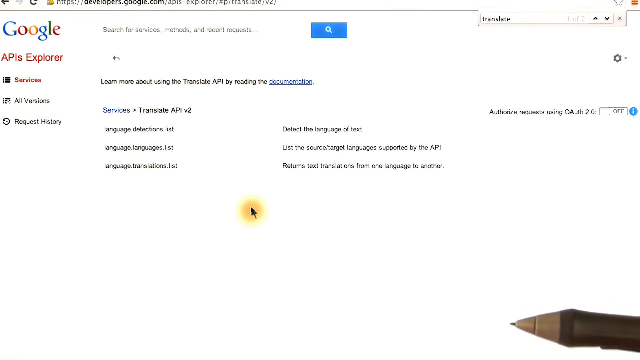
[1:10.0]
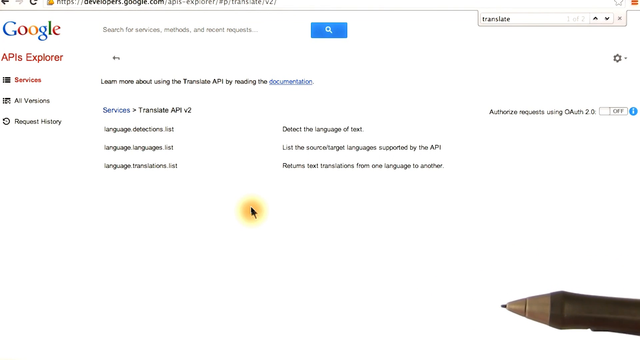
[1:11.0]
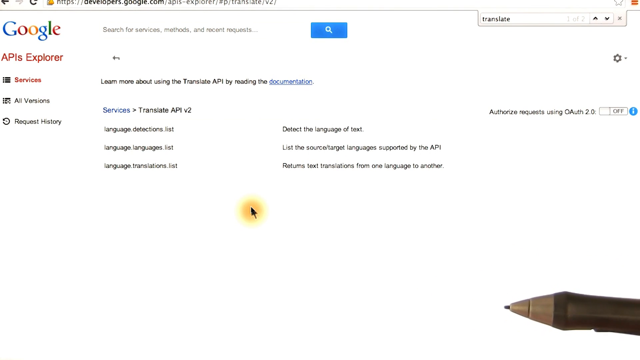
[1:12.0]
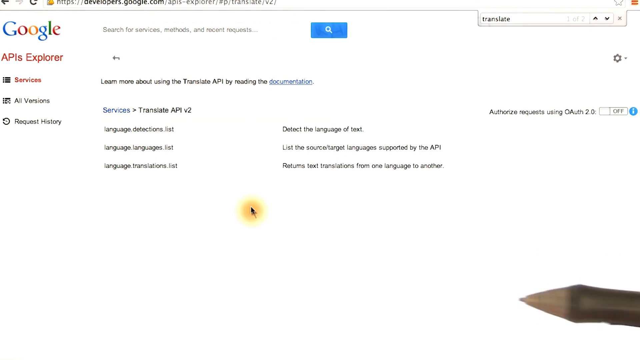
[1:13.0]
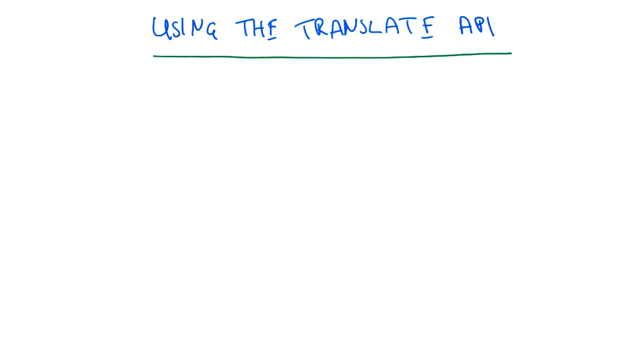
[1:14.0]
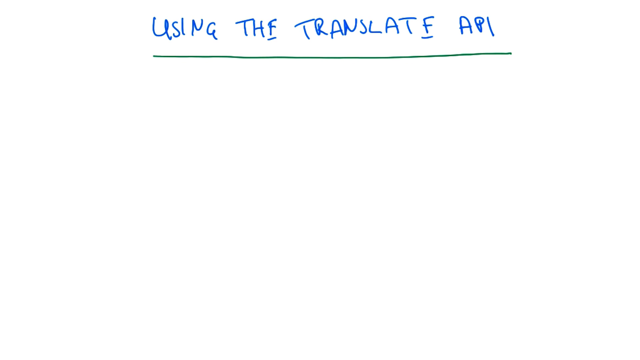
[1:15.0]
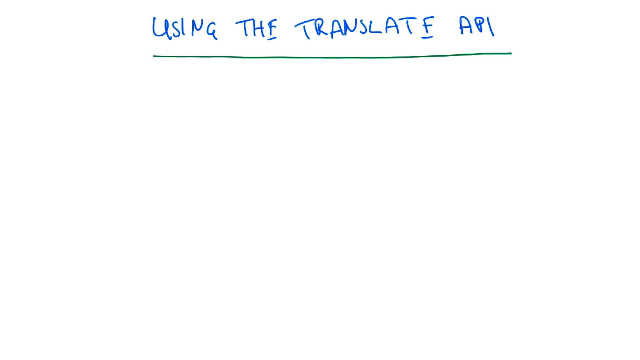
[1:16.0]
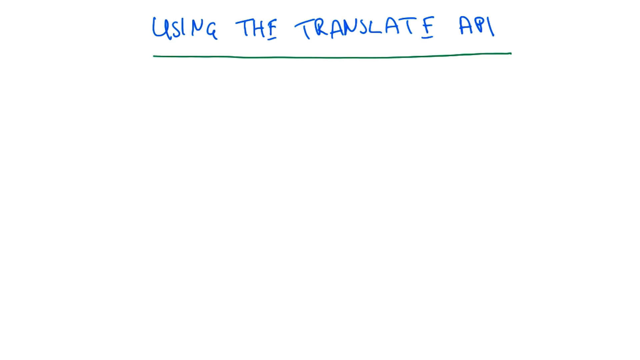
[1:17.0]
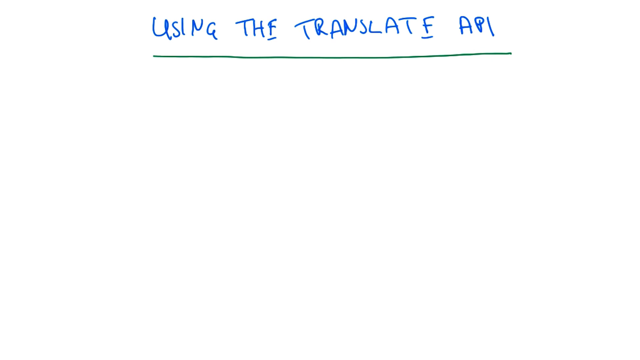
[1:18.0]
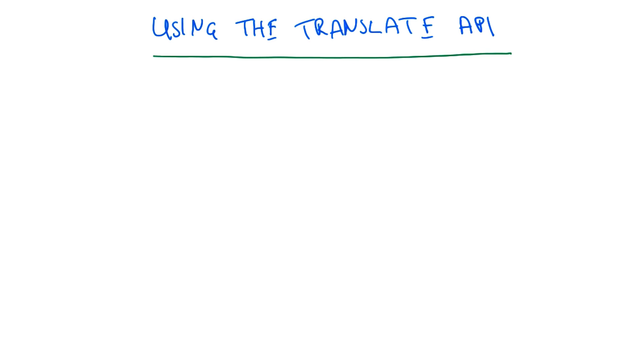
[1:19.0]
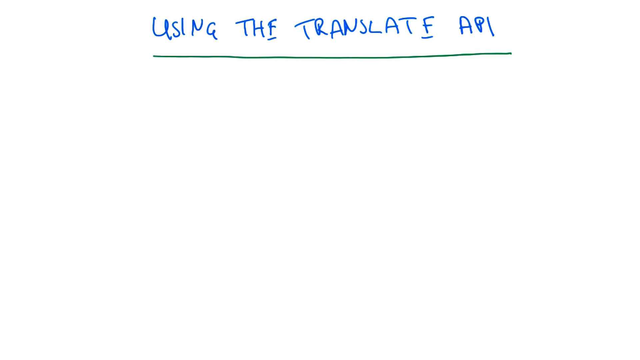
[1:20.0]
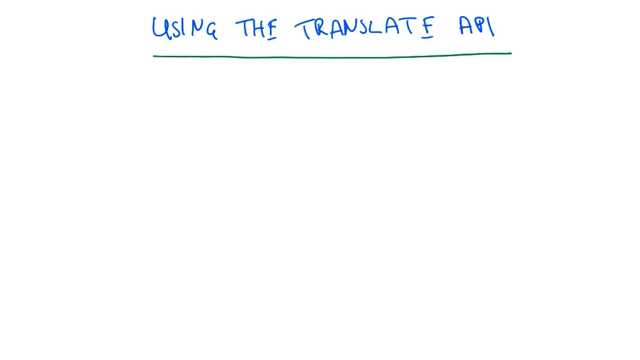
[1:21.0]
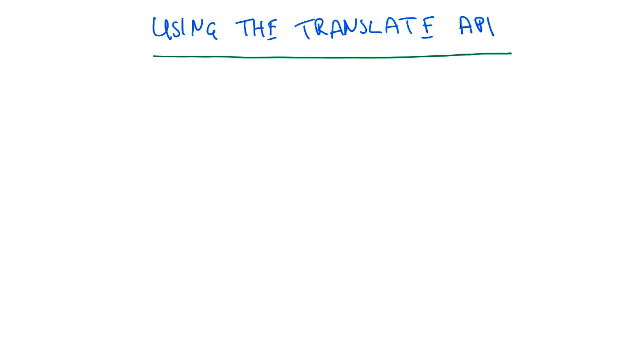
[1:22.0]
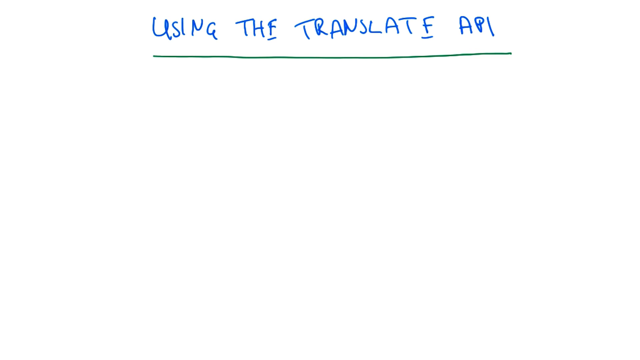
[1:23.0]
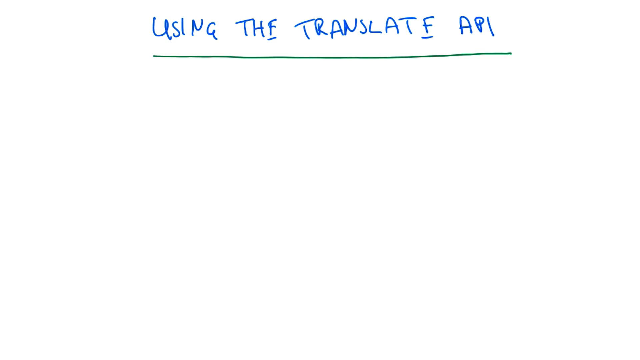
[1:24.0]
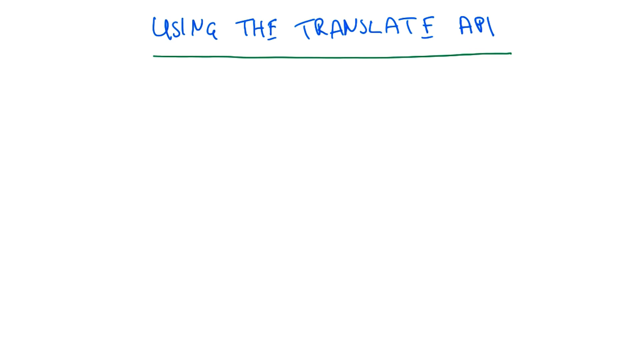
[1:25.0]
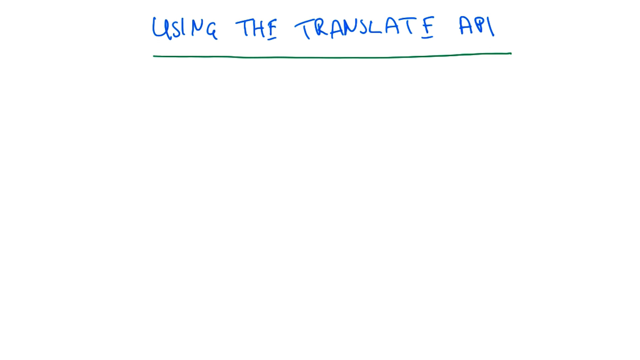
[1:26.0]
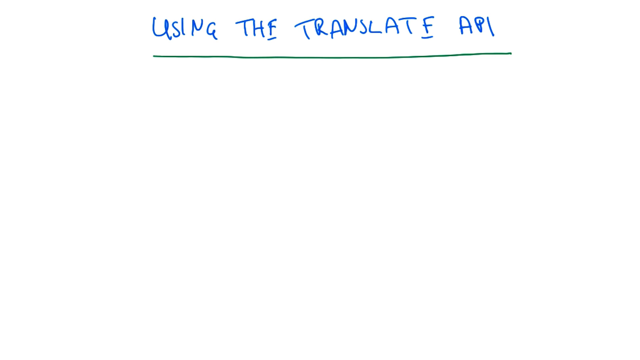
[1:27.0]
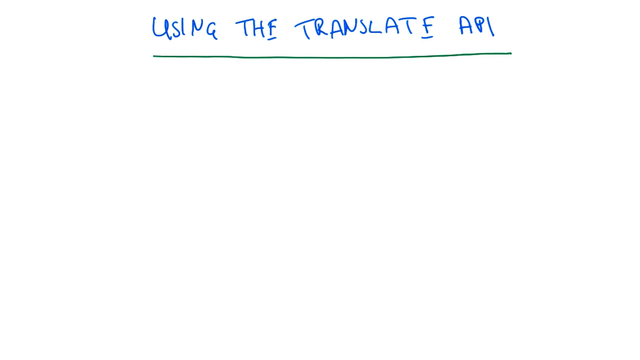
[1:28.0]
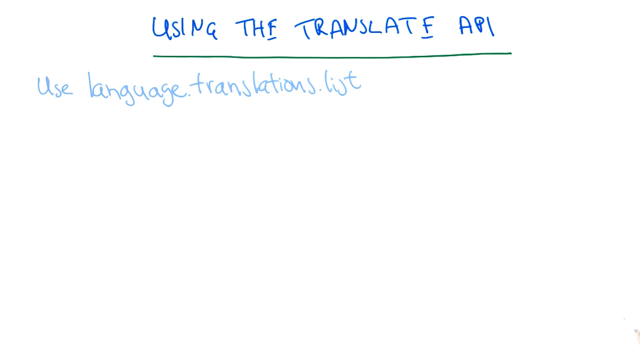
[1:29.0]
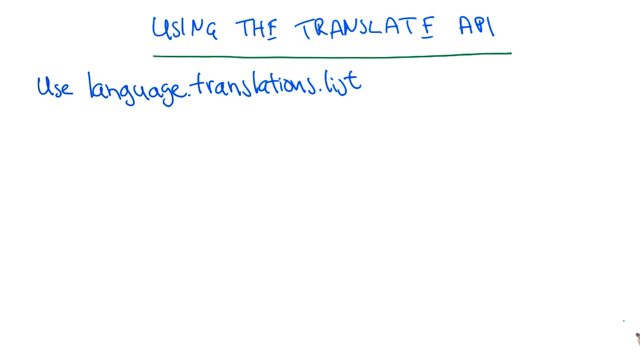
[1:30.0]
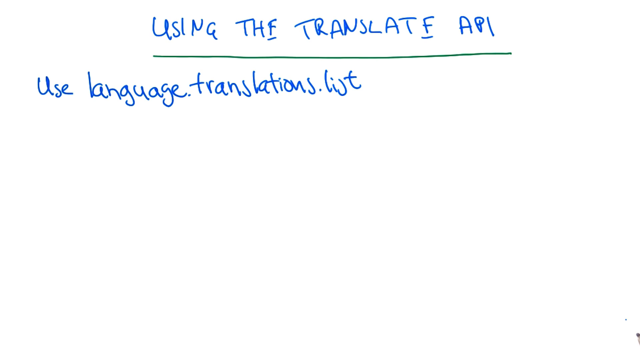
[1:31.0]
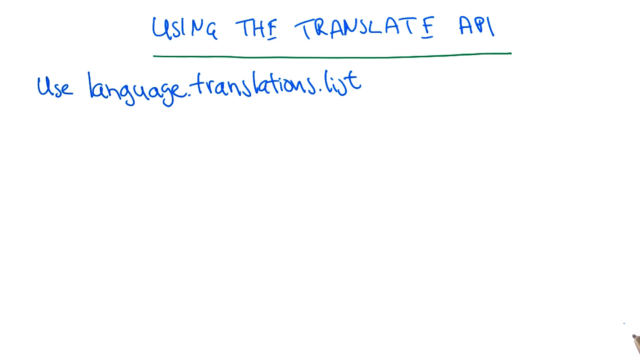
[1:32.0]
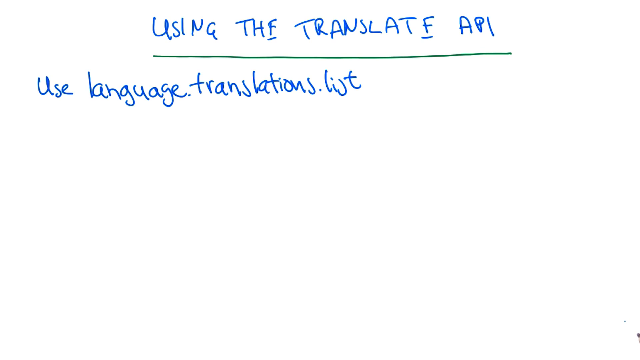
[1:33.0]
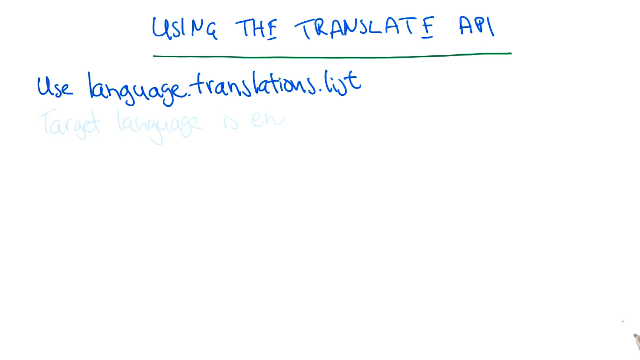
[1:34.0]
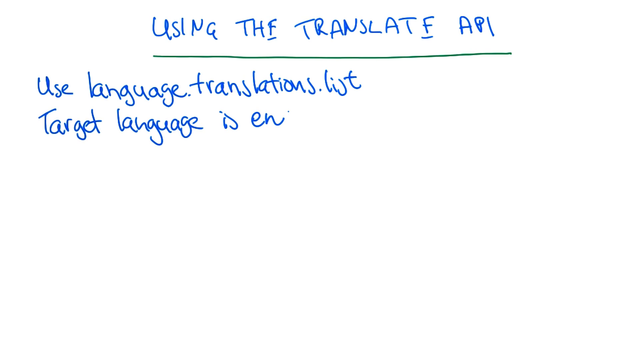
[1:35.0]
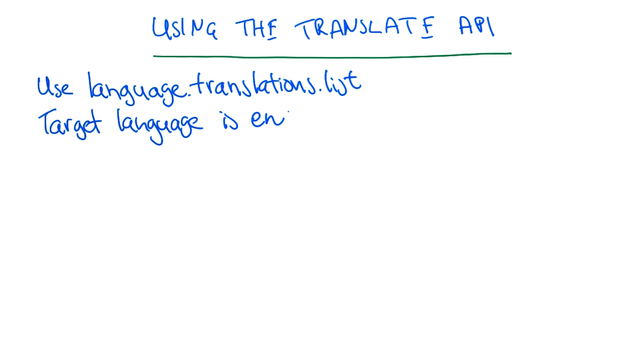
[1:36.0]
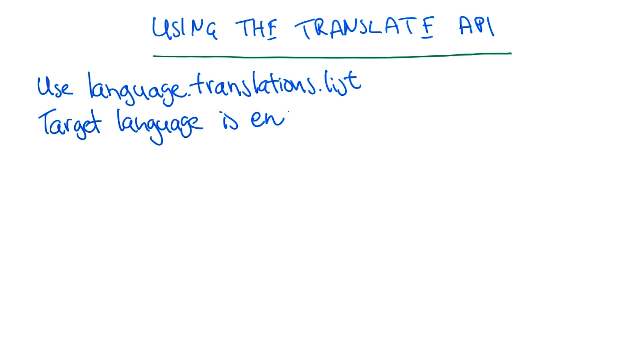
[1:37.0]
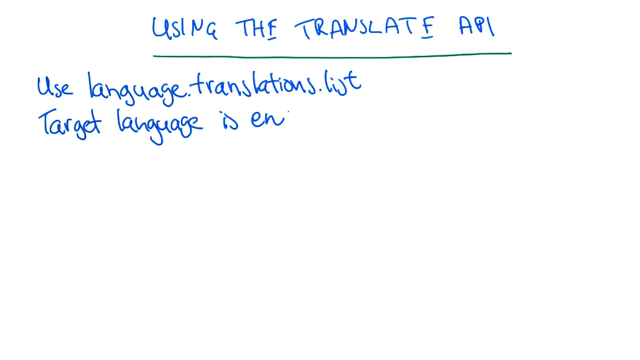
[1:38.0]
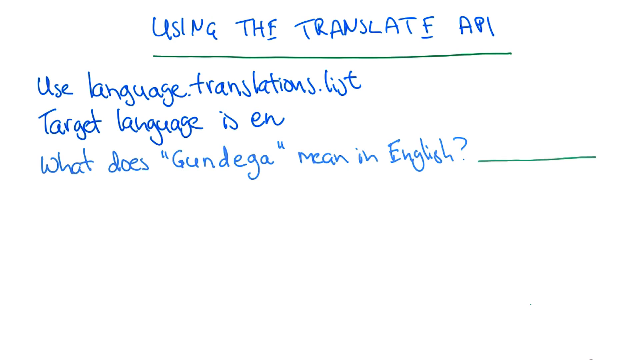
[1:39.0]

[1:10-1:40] The browser is on the URL developers.google.com/apis-explorer for the Google Translate API version 2. The page shows text reading "learn more about using the Translate API by reading the documentation", and below that three services are listed for the API: detect the language of text, list the source/target languages supported by the API, and return text translations from one language to another. A pen is visible at the bottom right of the screen, hovering over it. The screen then fades and a whiteboard appears with human writing in blue that says "Using the Translate API" in capital letters, with a green line below it as if the text is underlined. Text then appears below that says "use language.translations.list", then text saying "target language is EN", and then text saying "what does "gundega" mean in English?", with a green line next to this question.